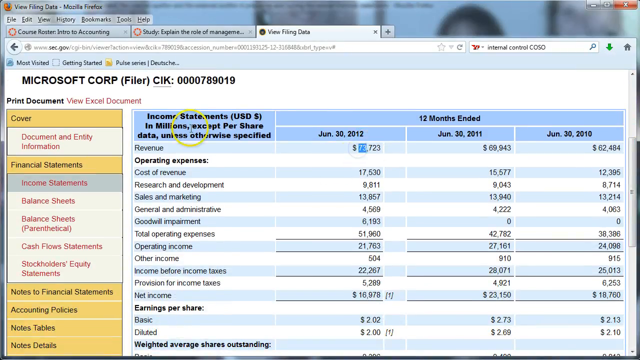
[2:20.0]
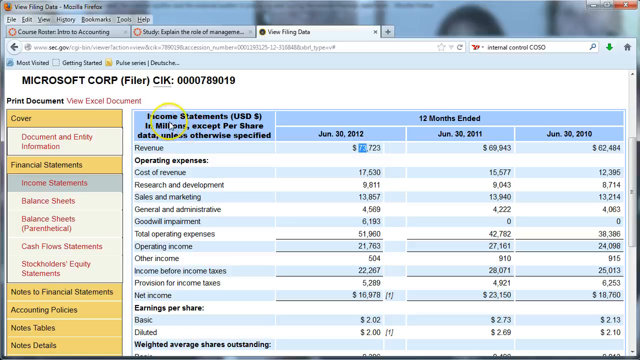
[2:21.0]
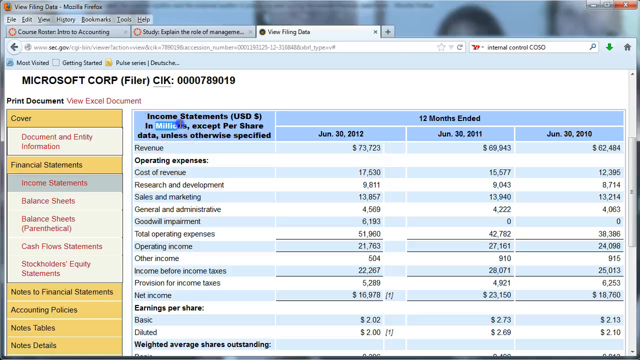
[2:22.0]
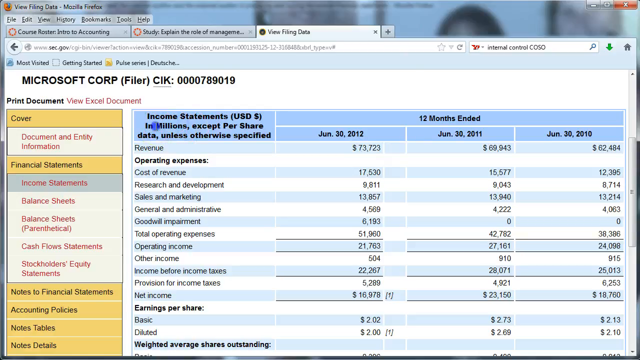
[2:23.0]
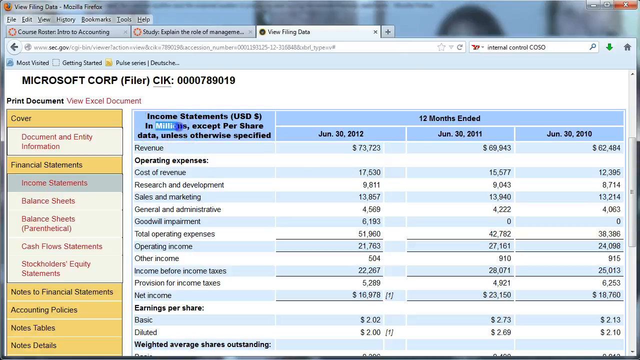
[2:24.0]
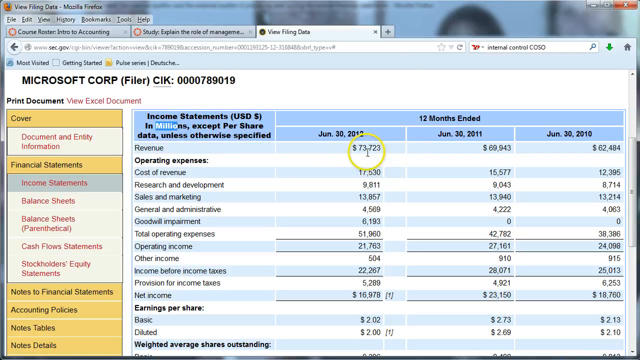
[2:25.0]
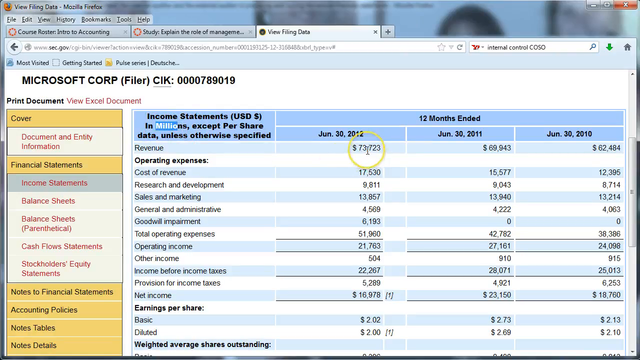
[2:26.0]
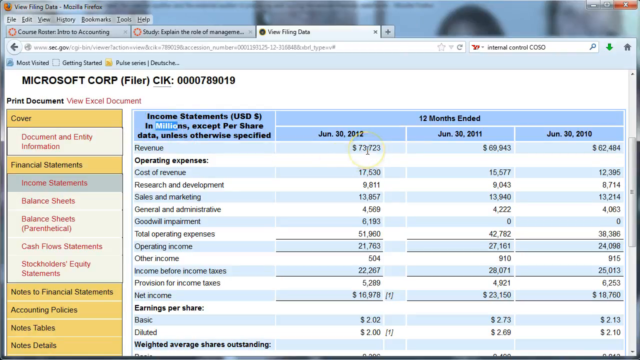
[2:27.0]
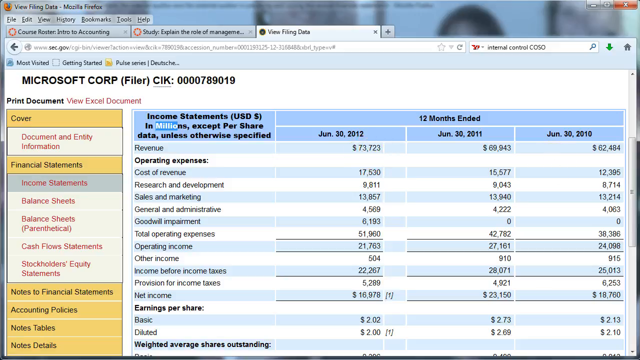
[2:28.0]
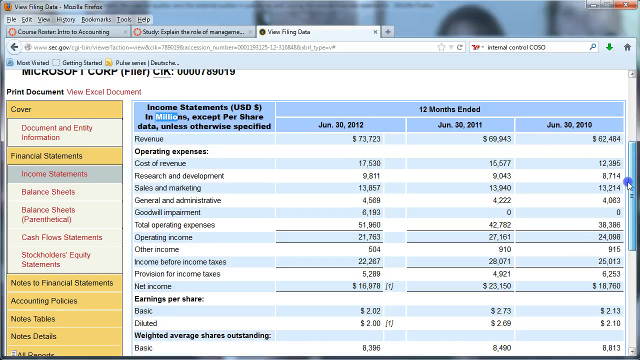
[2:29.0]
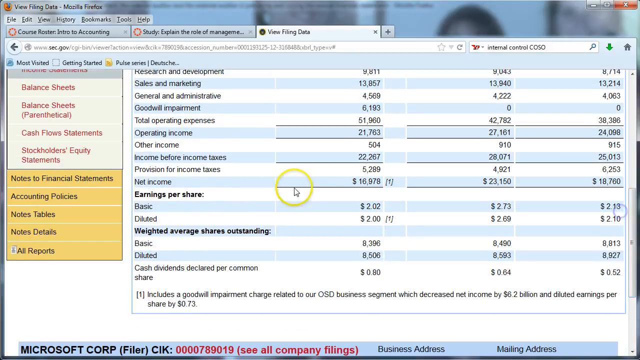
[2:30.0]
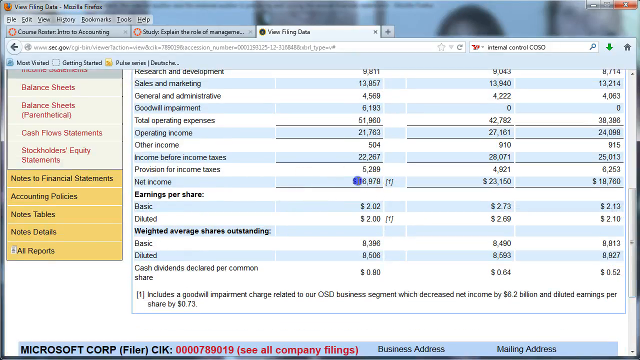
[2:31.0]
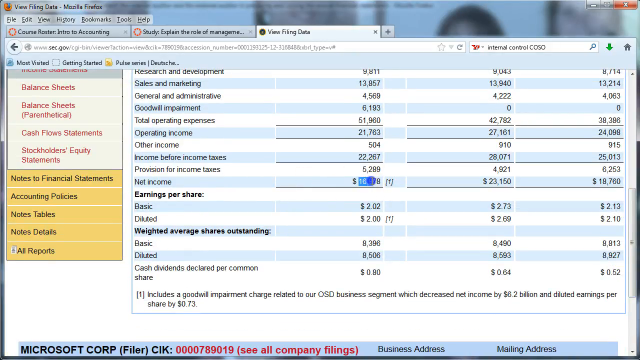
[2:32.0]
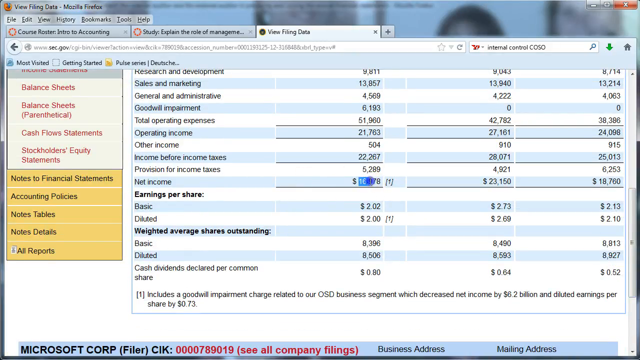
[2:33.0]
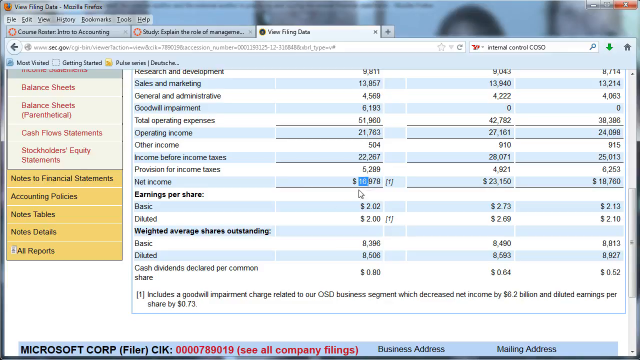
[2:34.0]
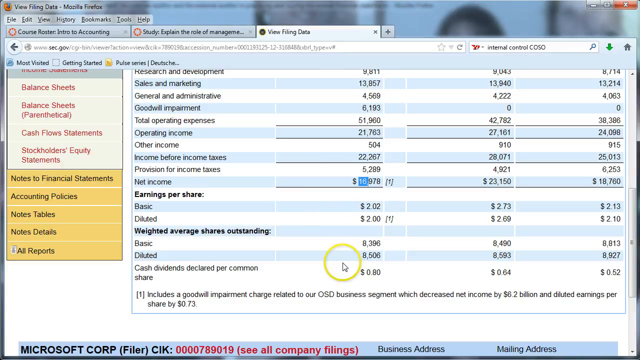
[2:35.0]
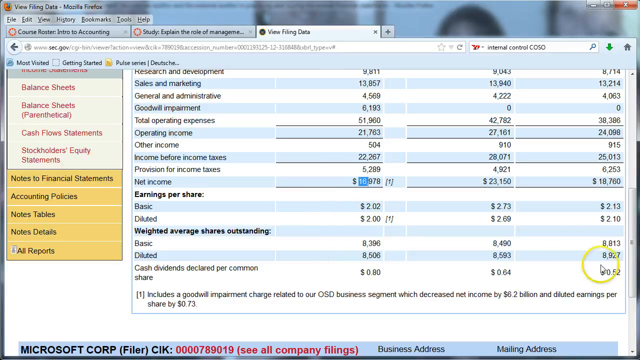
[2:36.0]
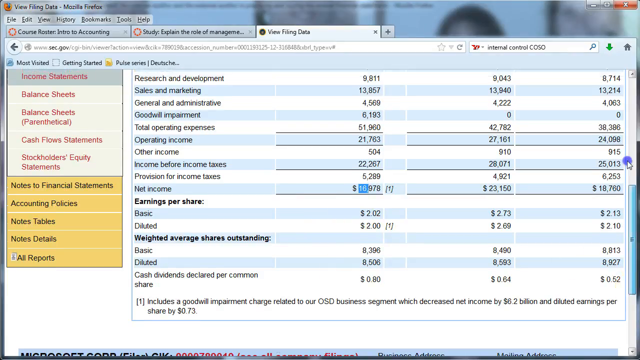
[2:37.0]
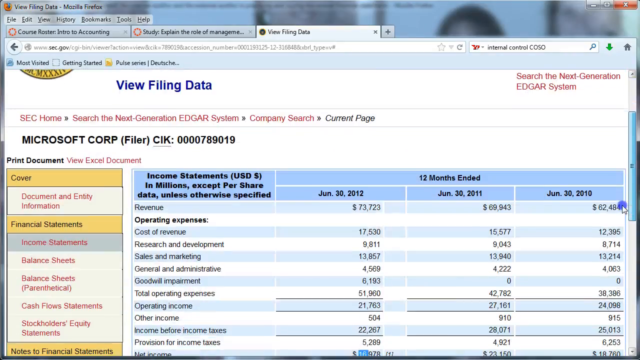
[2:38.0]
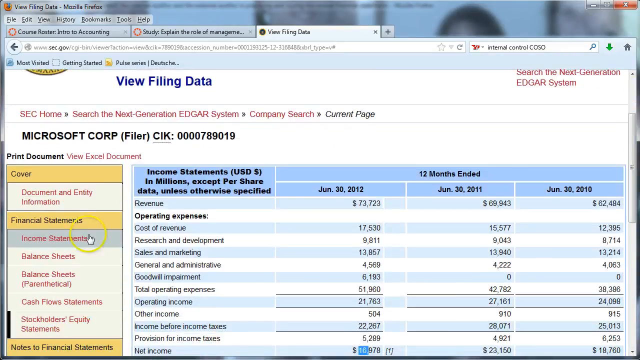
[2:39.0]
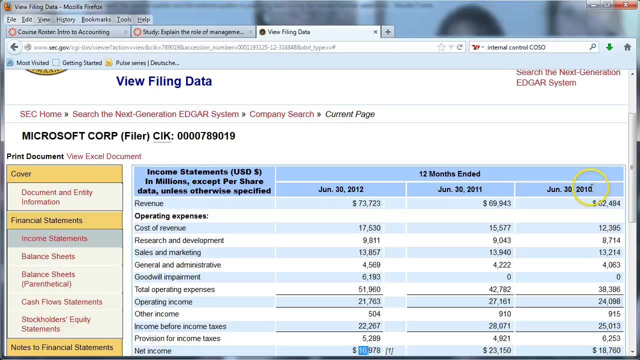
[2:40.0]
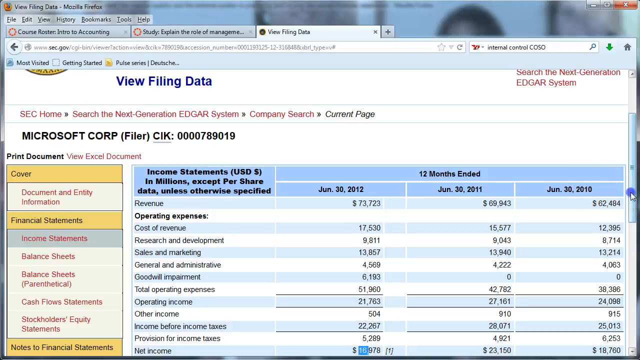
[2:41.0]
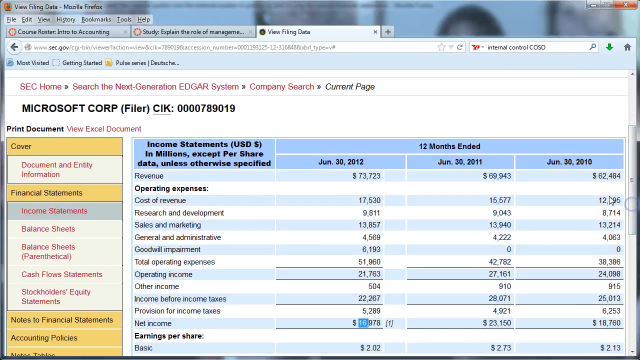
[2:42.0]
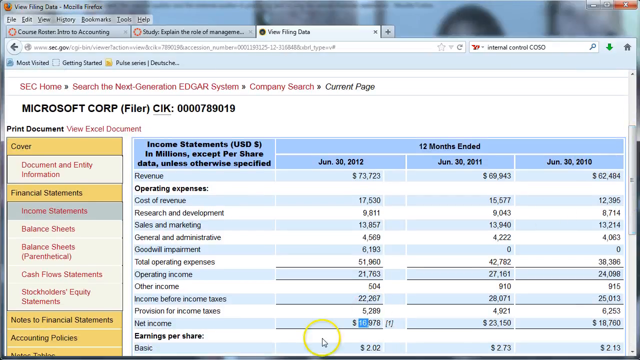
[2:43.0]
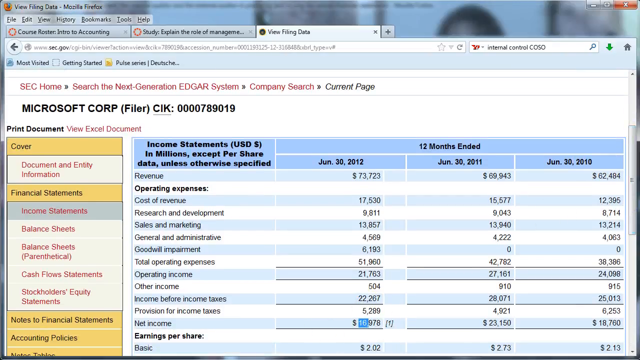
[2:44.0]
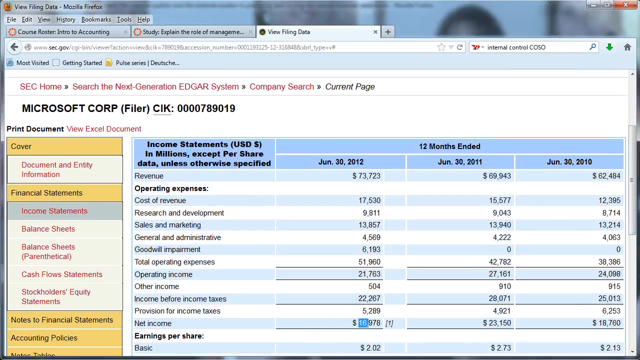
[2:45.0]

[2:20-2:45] The cursor hovers over the top of the income statement chart, which reads "income statements" and "millions except per share data unless otherwise specified", and highlights "millions". The revenue of $73,723 for June 30, 2012 is visible. The user then scrolls down and highlights the net income of about $16,973. The chart also lists other 2012 line items that are not highlighted: cost of revenue, research and development, sales and marketing, general administrative, goodwill impairment, total operating expenses, operating income, other income, income before income taxes, provision for income taxes, and net income.